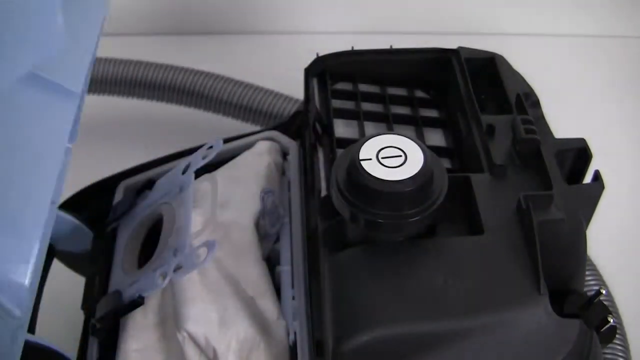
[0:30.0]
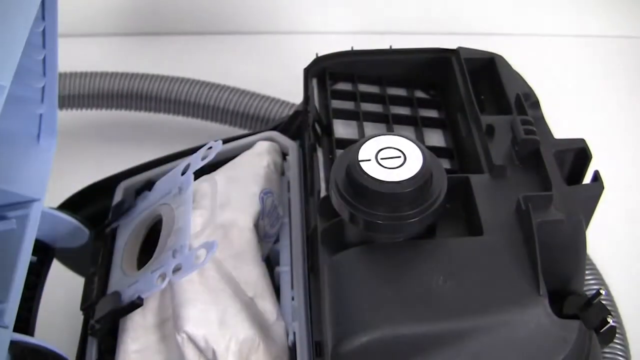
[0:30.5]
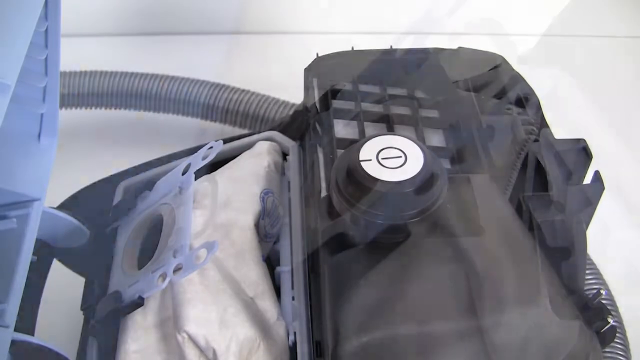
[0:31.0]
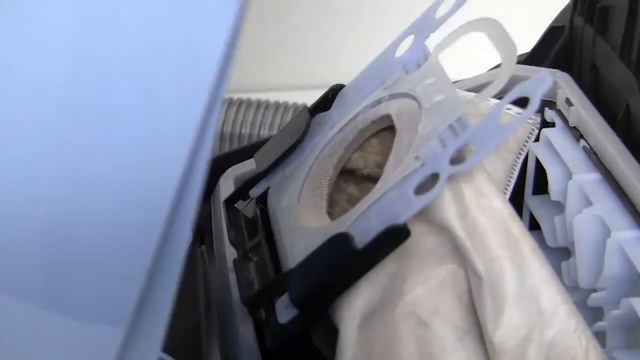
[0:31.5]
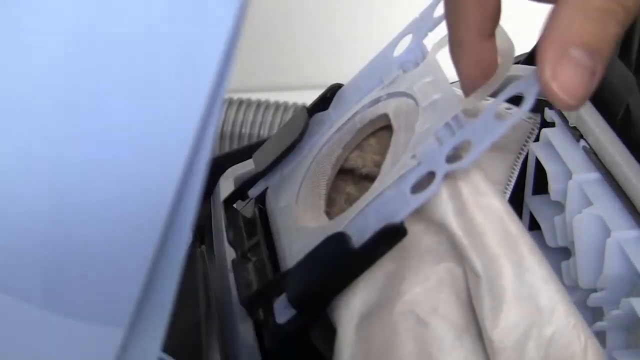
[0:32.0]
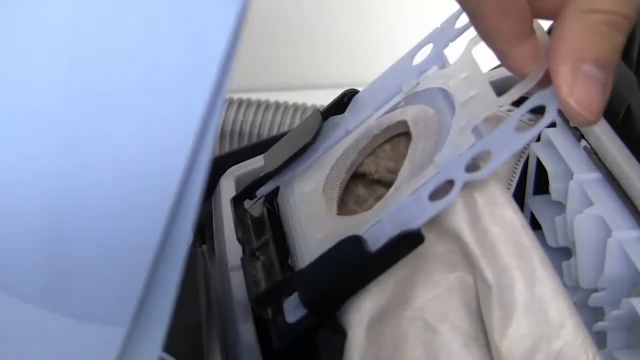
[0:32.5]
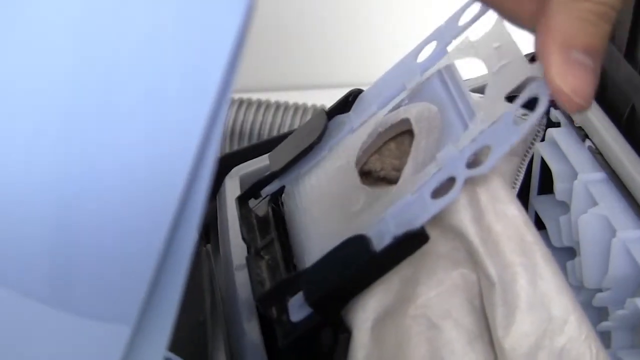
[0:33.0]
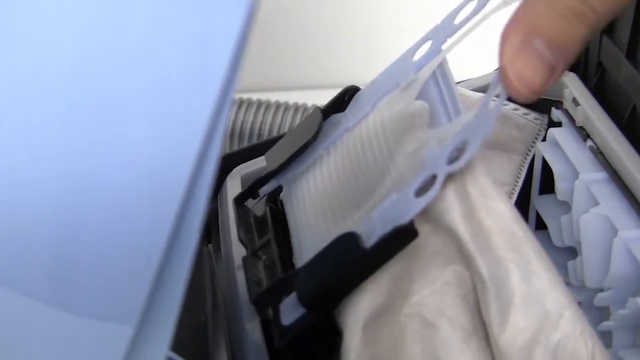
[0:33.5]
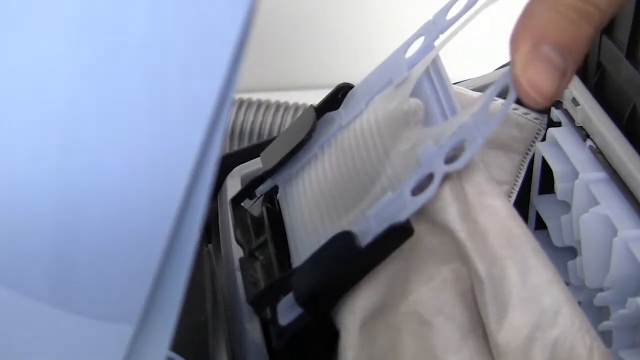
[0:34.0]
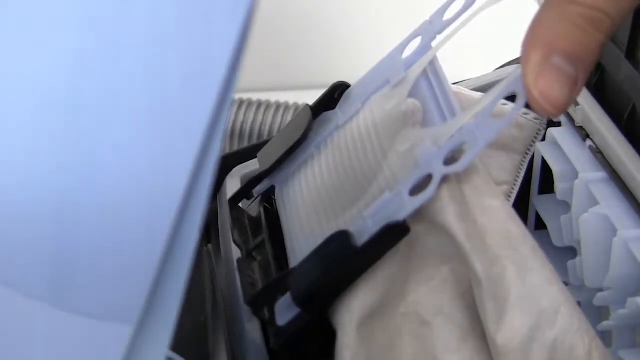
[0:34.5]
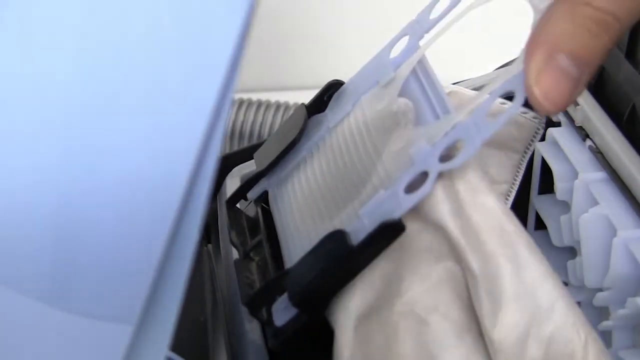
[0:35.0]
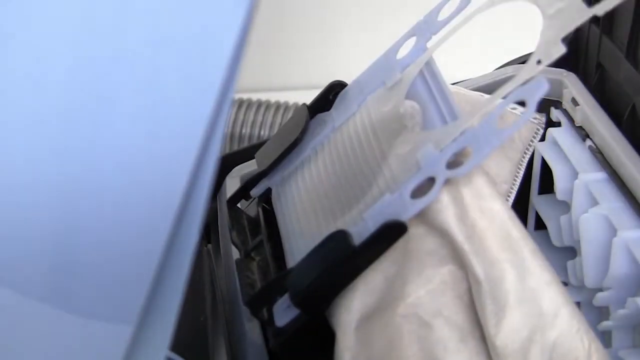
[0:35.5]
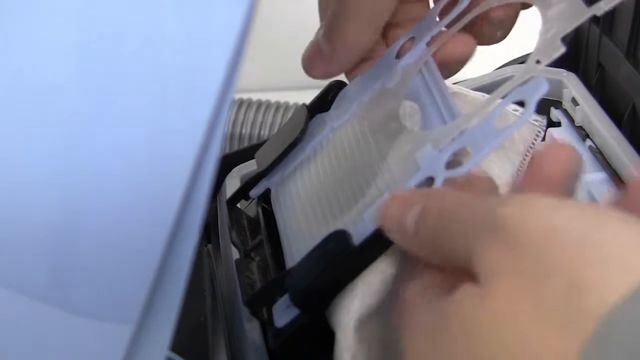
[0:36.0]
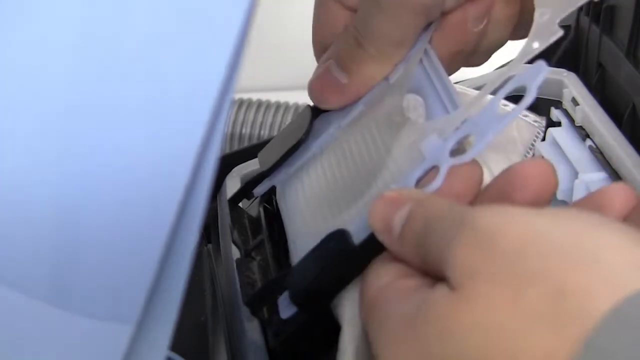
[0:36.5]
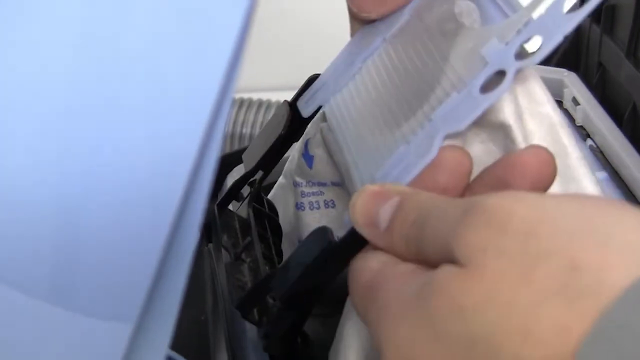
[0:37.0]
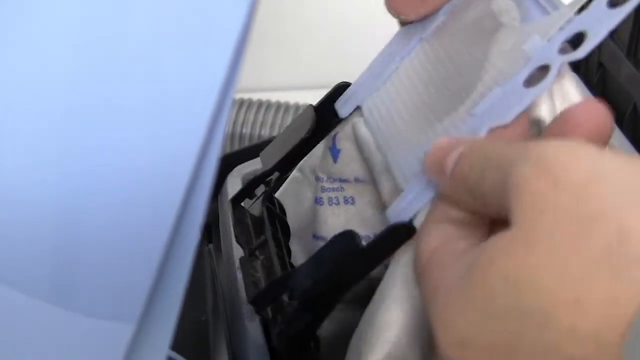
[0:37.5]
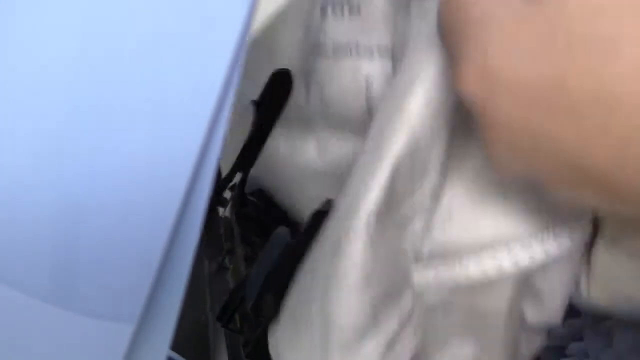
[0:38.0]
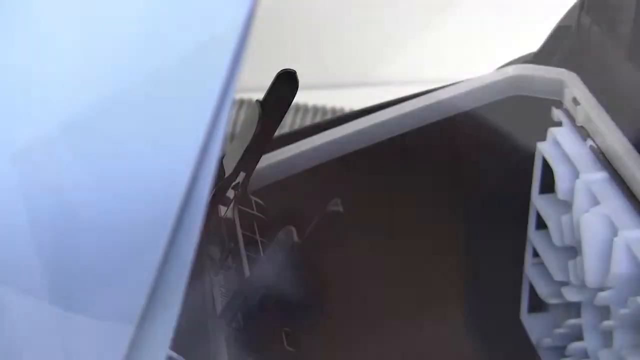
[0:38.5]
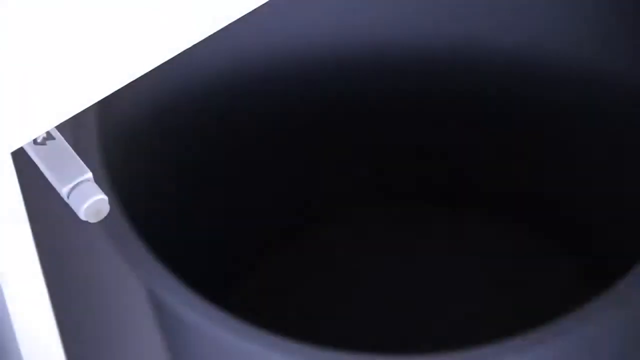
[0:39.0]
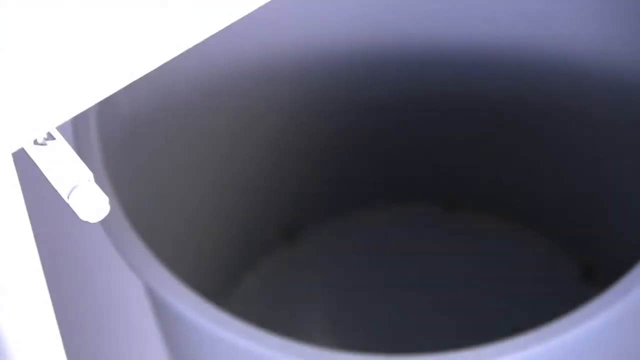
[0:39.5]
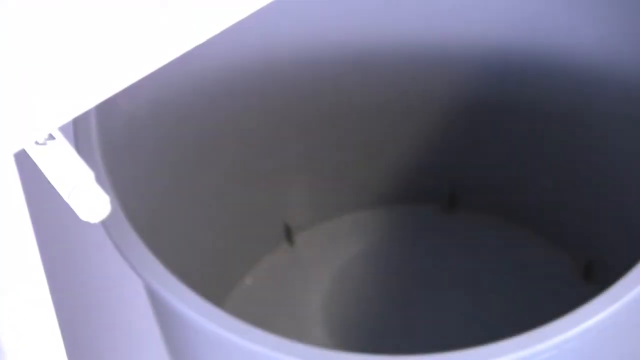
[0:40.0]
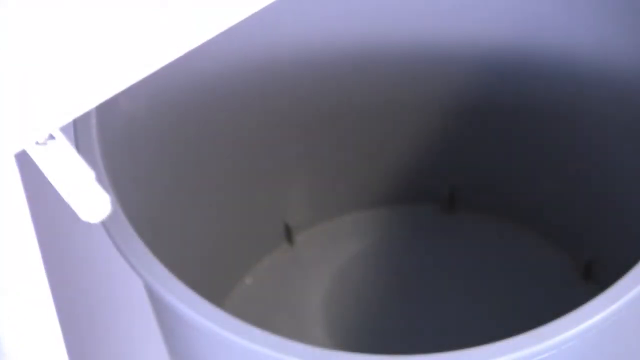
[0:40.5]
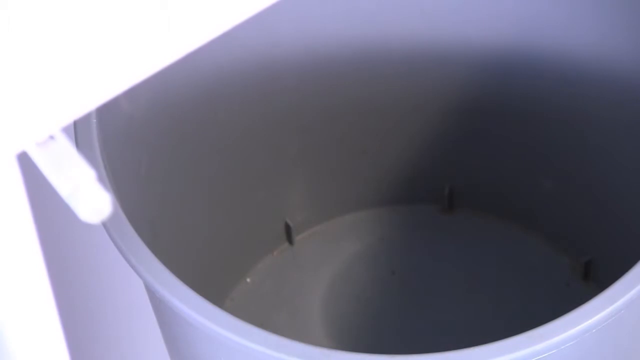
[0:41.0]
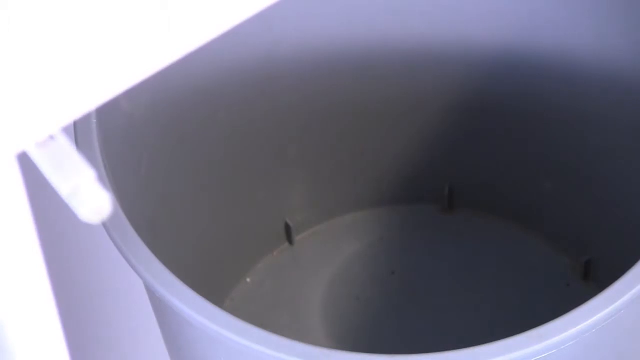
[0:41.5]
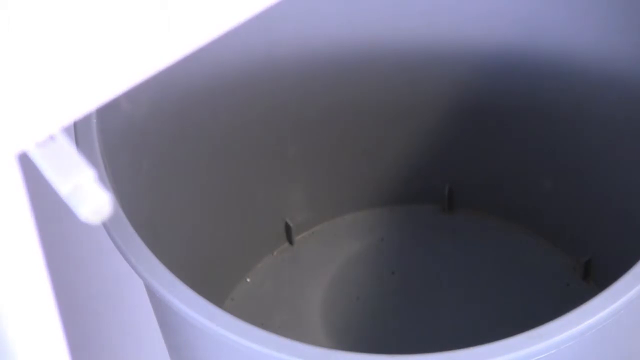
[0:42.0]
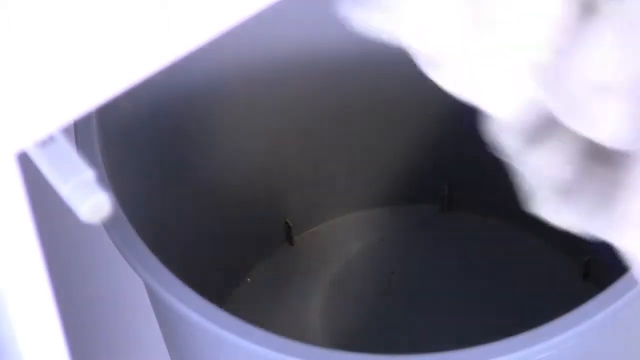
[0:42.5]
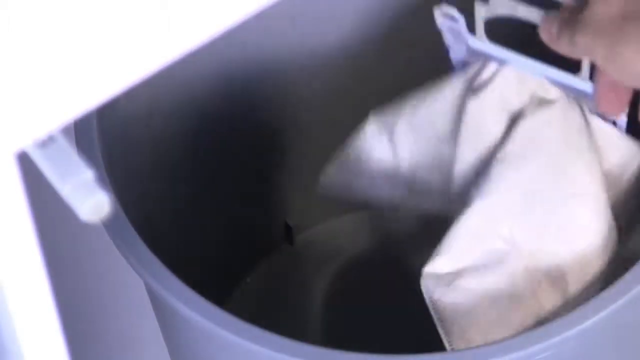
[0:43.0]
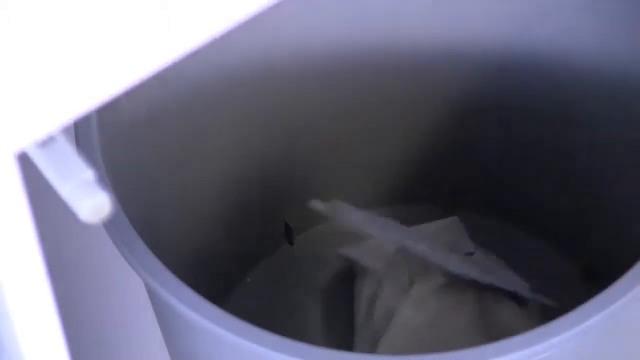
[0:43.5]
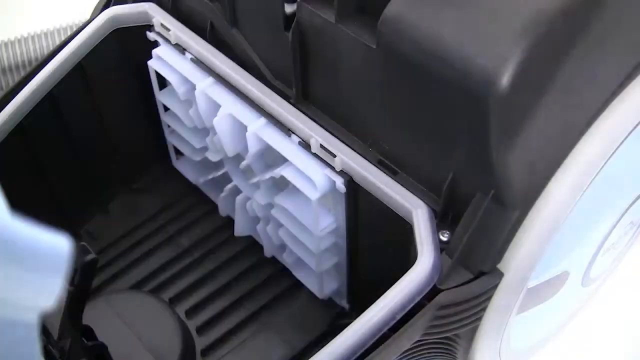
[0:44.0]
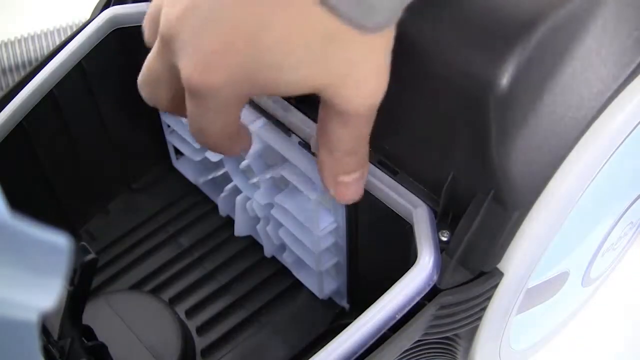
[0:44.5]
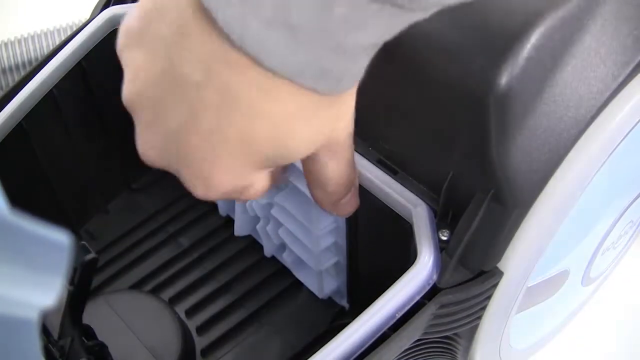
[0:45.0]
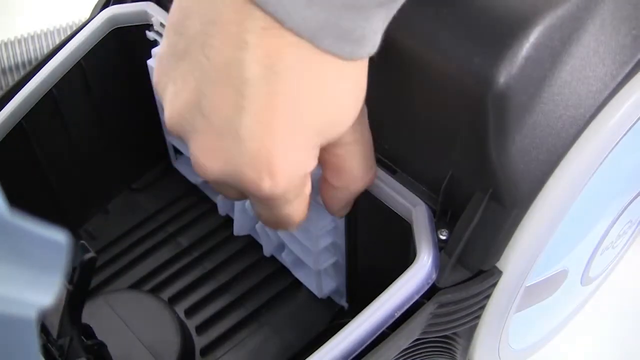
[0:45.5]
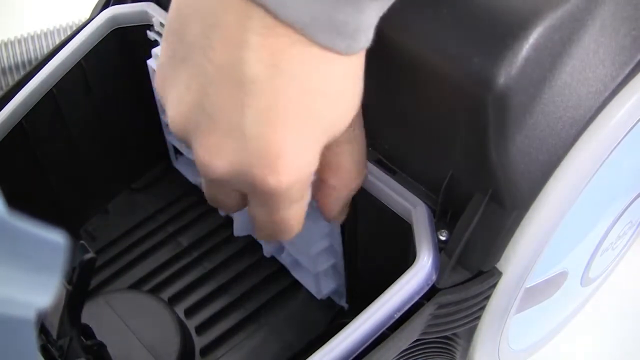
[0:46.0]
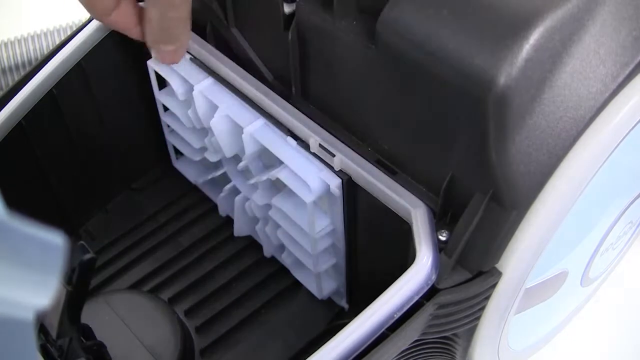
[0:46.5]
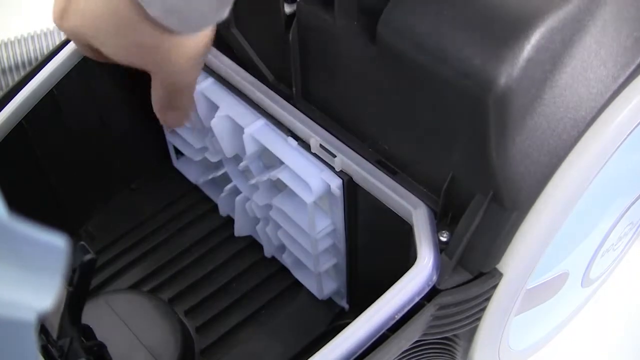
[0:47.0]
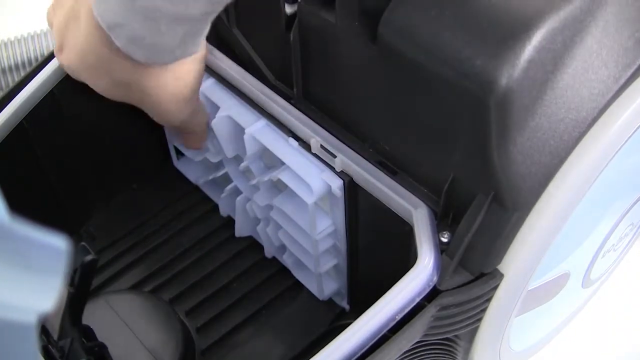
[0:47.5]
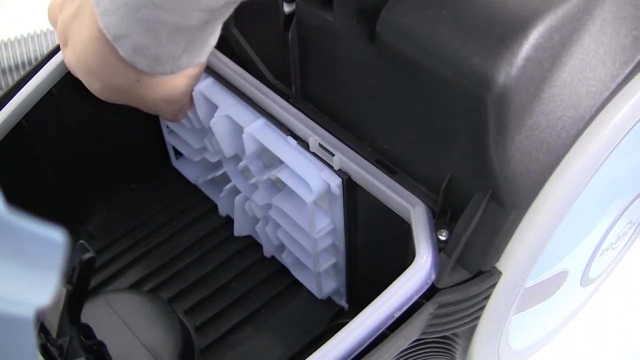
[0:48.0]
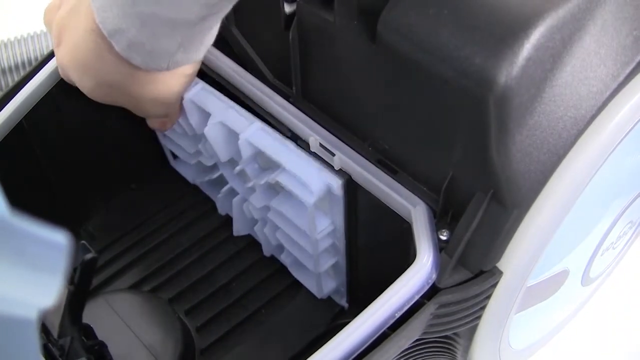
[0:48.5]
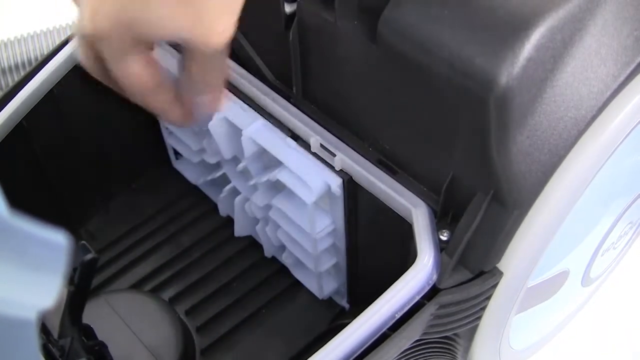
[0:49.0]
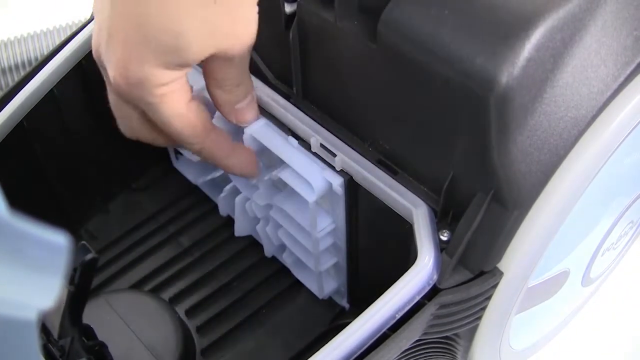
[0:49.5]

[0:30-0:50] The vacuum is shown opened up; it is blue, and its inner part is black. A knob with the power button sign sits at the very top of it. A hand then reaches directly into the vacuum and pulls out a piece from inside, removing an object that looks like it may be some sort of filter, leaving the empty space inside the vacuum visible. The individual then places the sack into that empty space. The scene transitions to a hand pulling out another item from inside another part of the vacuum.